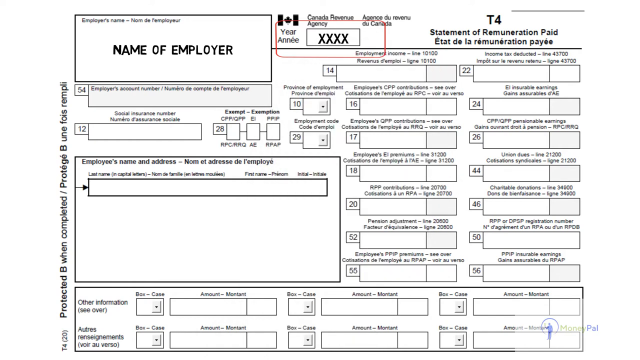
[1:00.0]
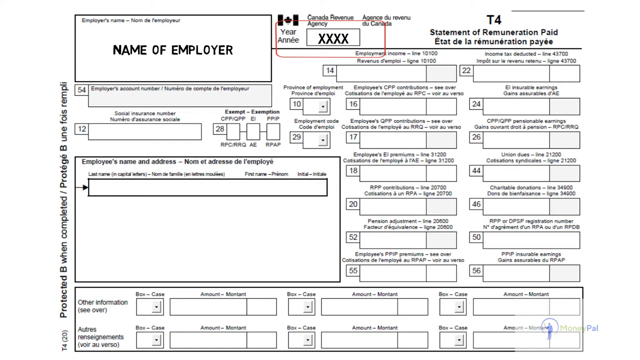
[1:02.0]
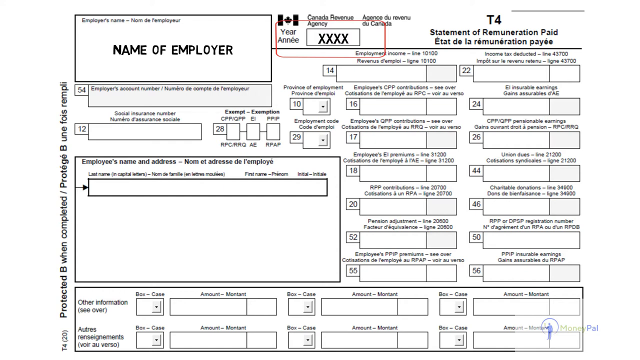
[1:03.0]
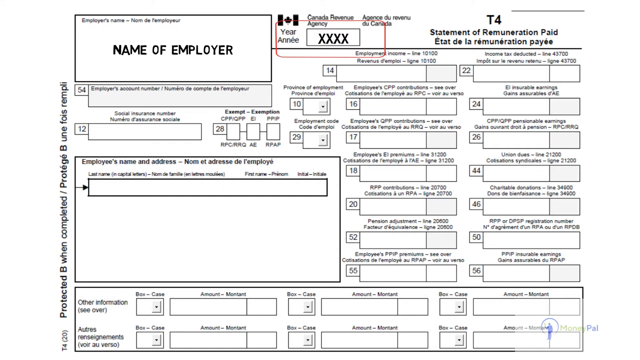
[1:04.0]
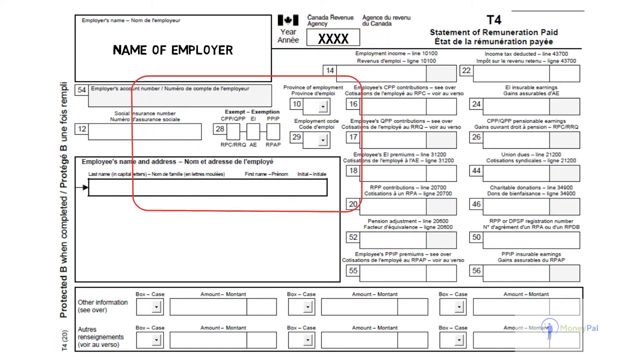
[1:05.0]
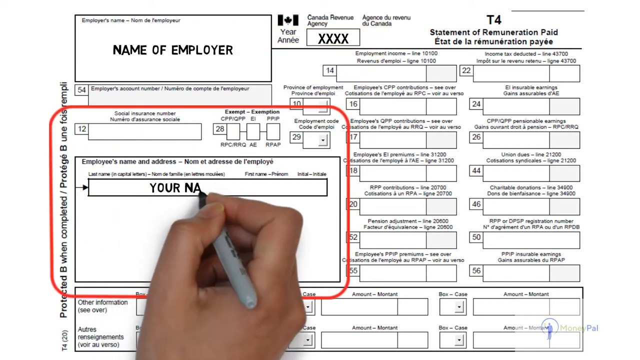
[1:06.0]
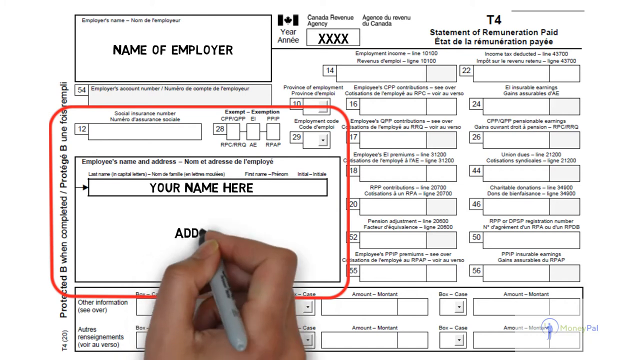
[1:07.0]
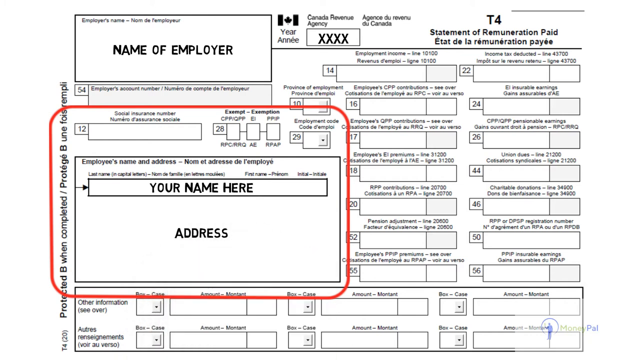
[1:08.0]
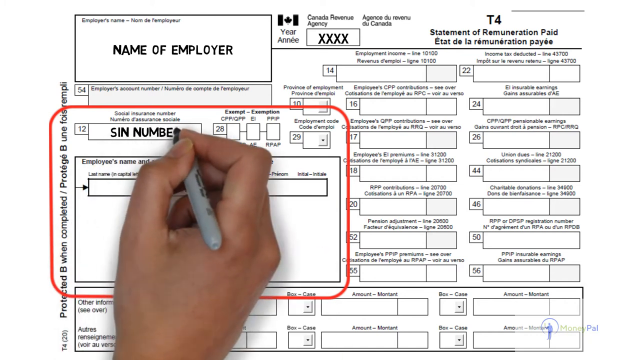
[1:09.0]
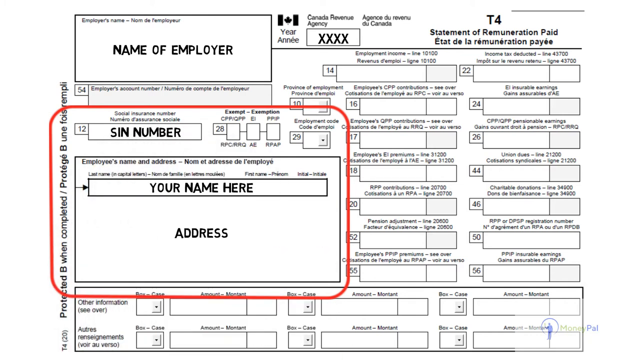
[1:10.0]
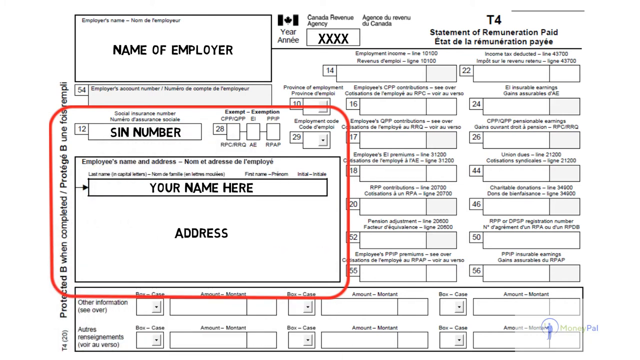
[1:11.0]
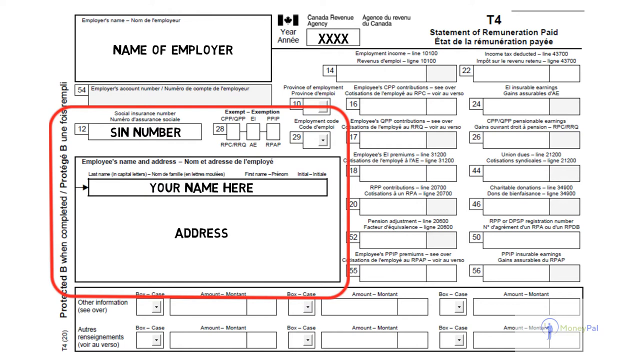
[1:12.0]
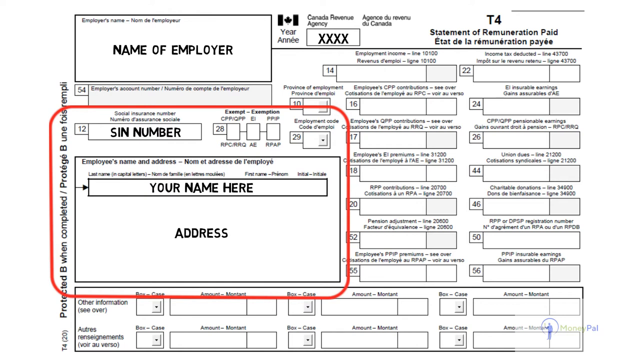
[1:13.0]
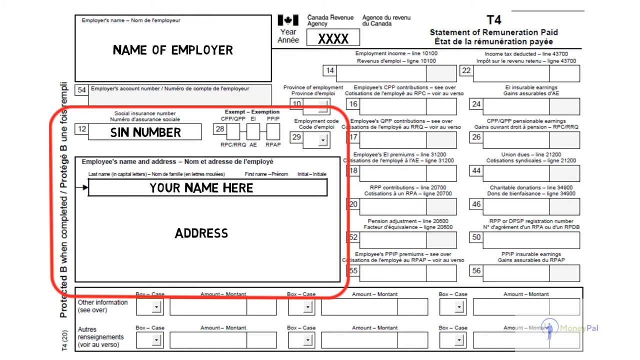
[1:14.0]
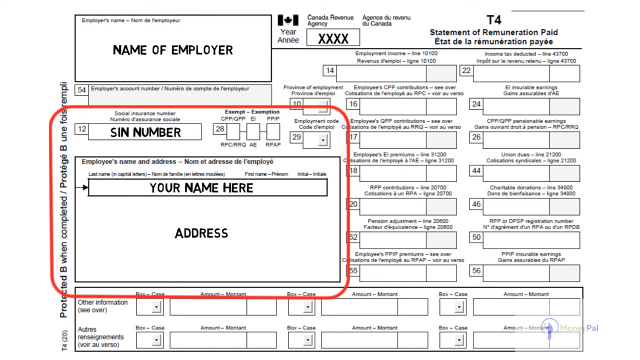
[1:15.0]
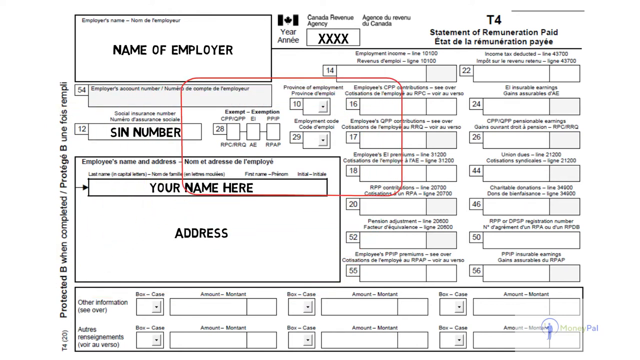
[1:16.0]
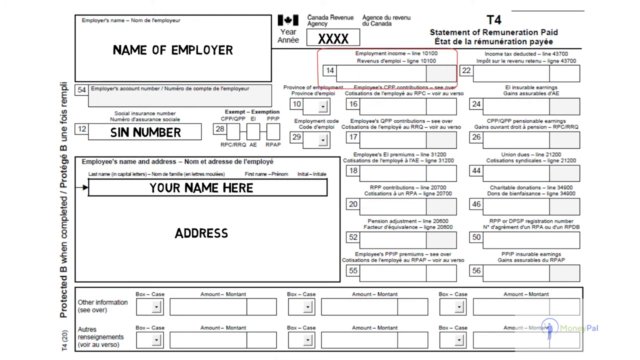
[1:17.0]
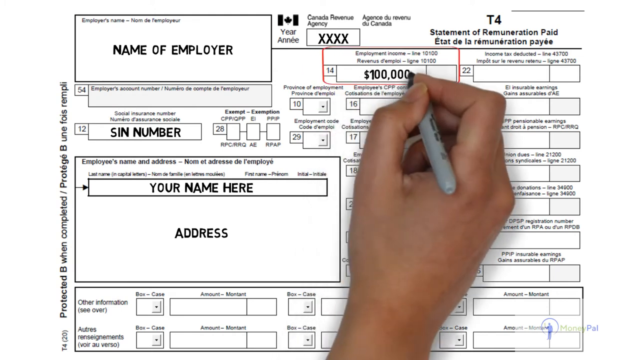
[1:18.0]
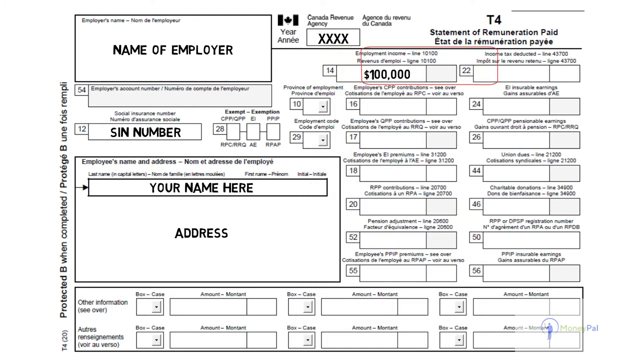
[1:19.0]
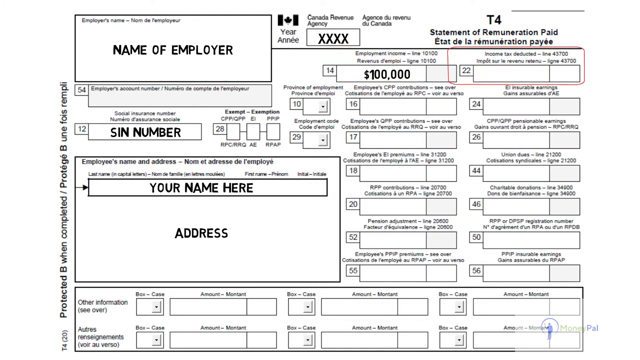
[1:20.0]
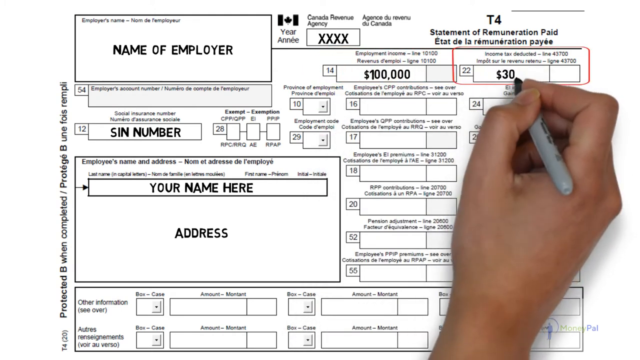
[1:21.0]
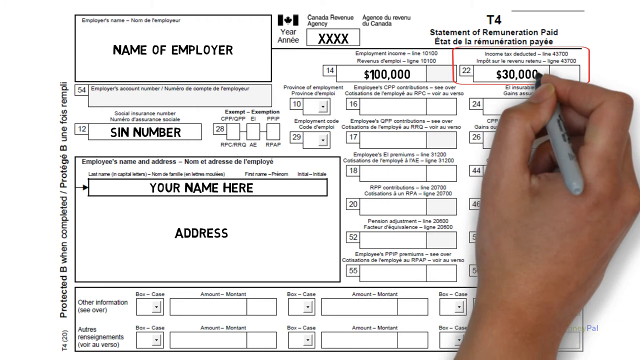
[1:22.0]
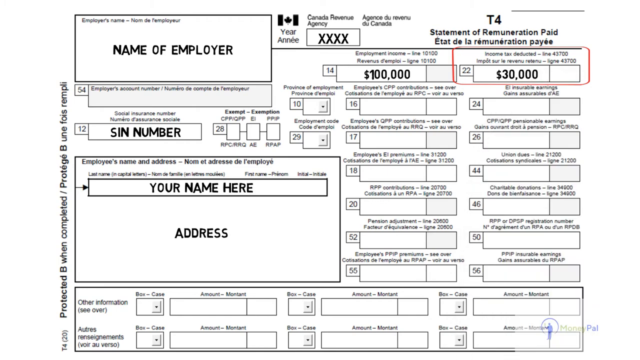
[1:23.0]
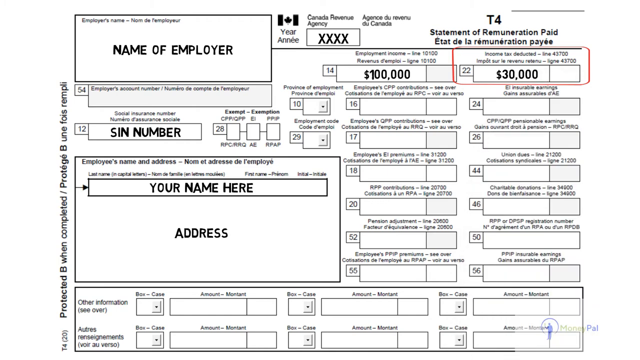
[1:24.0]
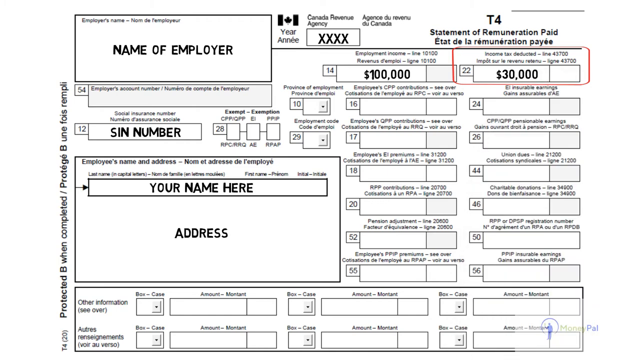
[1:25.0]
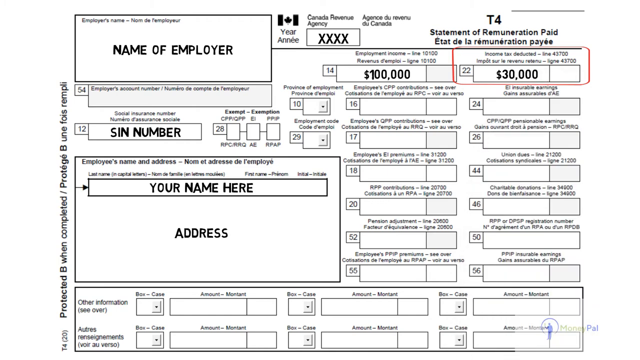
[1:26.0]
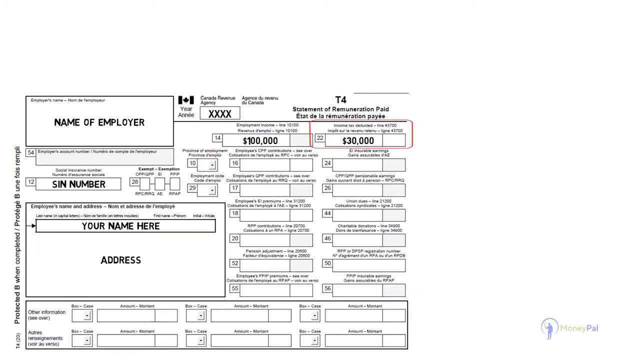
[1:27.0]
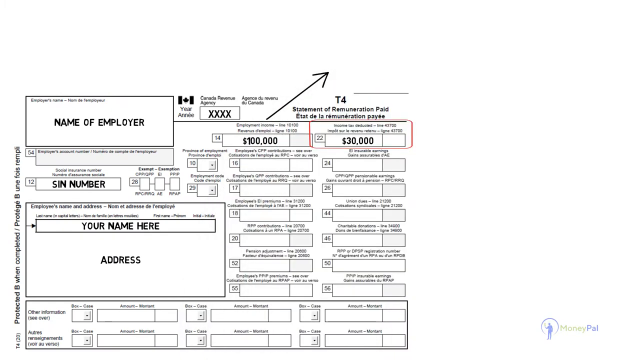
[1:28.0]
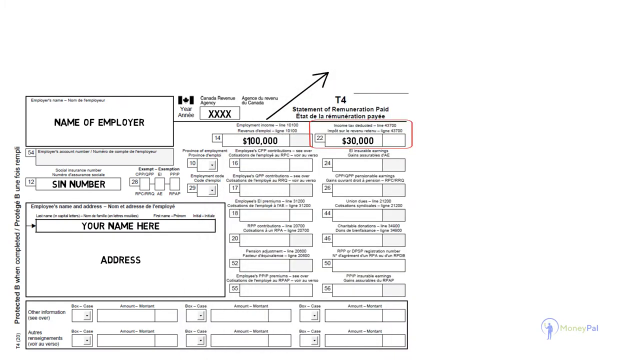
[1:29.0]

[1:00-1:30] On the T4 slip, a square that shows what is being filled in enlarges and moves to the bottom left corner, where the name and address are to be inserted, and to the top left of that, where the SIN number goes. The square then shrinks, and the person enters an amount of $100,000 and, on the right side, an amount of $30,000. The view zooms out, an arrow points to the top right corner, and a block is drawn there as the person is about to write something that is not on the T4 slip.